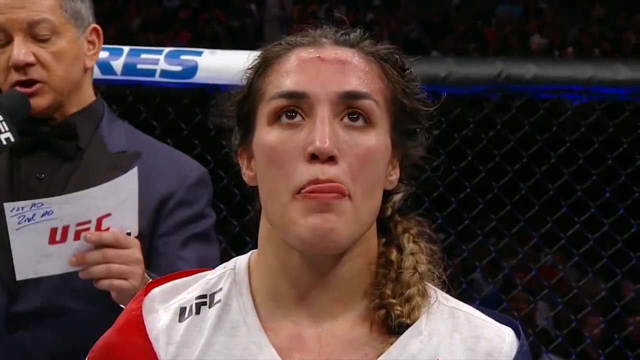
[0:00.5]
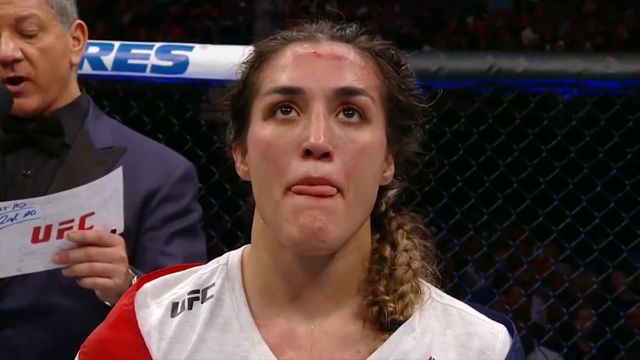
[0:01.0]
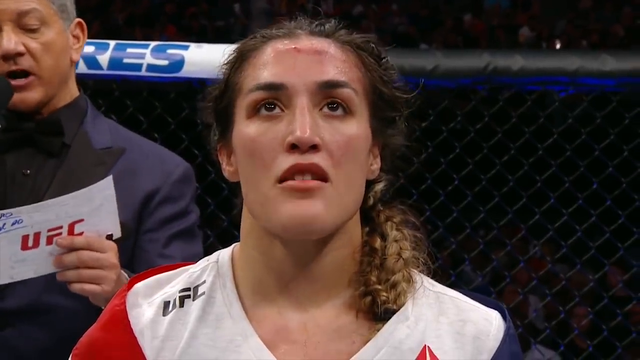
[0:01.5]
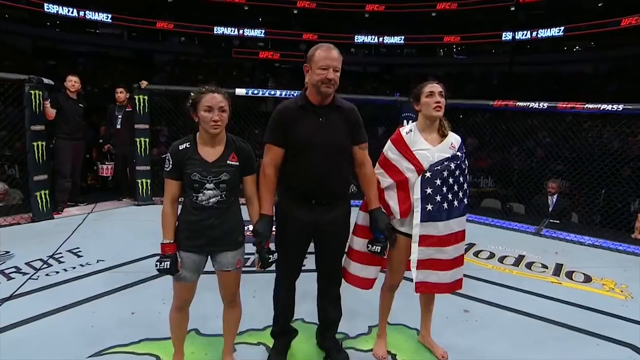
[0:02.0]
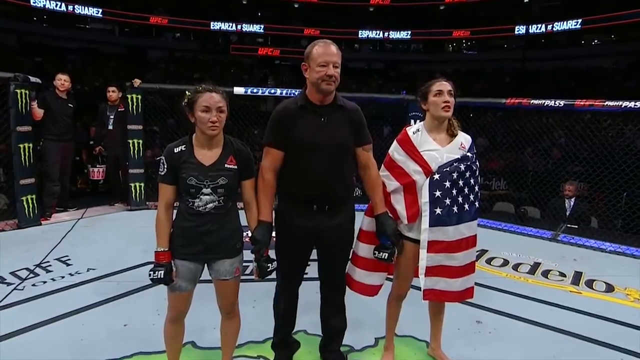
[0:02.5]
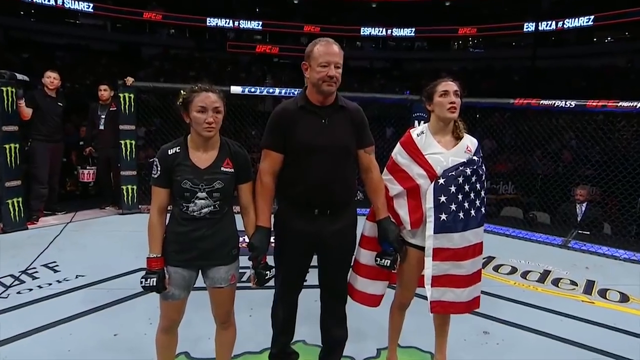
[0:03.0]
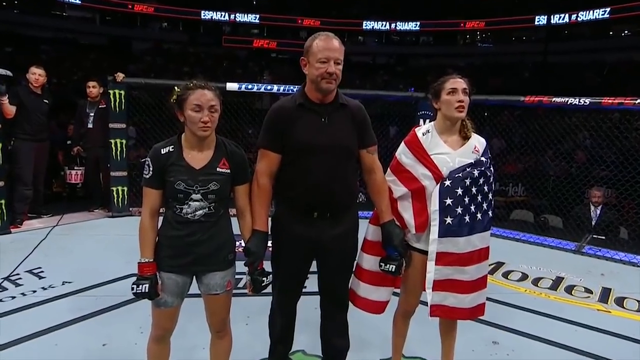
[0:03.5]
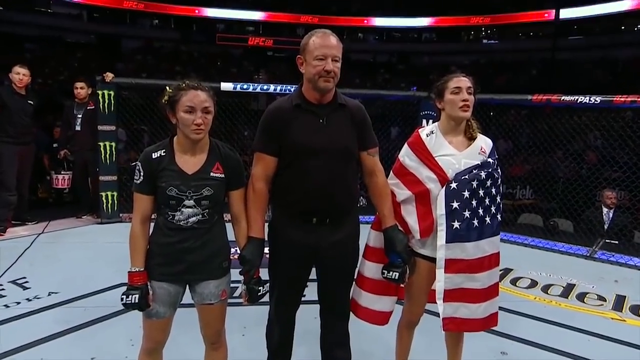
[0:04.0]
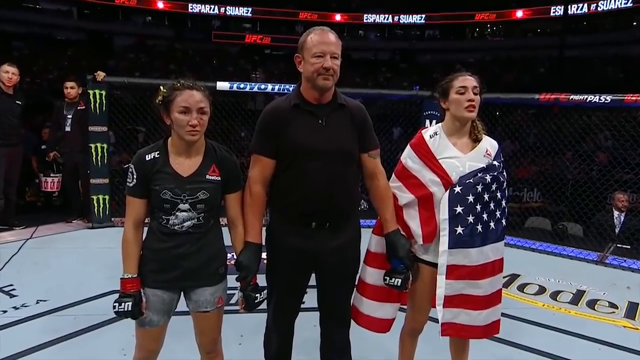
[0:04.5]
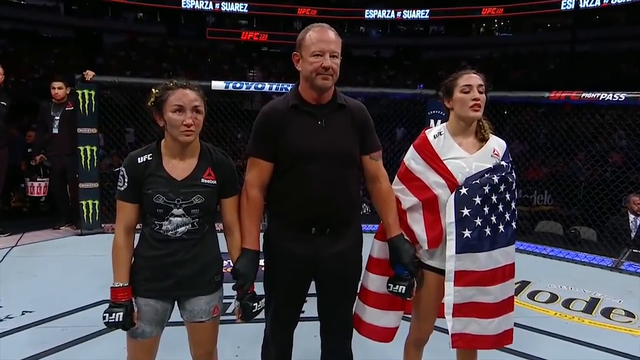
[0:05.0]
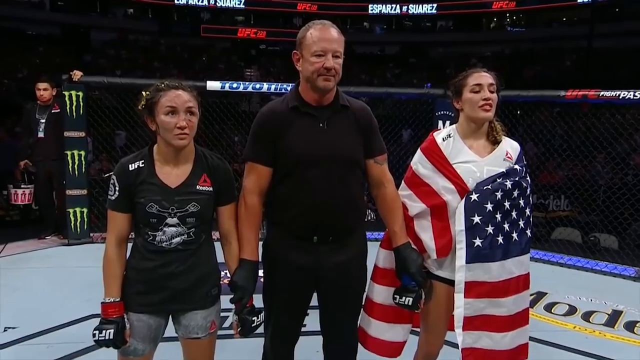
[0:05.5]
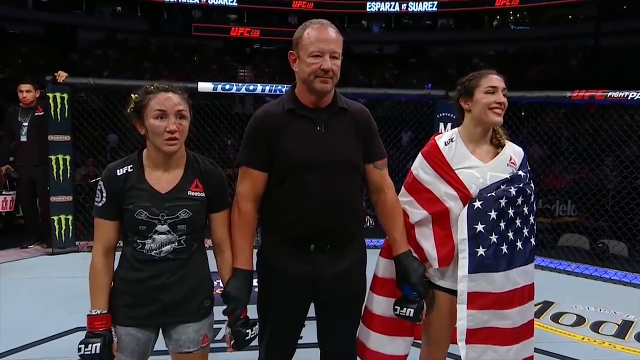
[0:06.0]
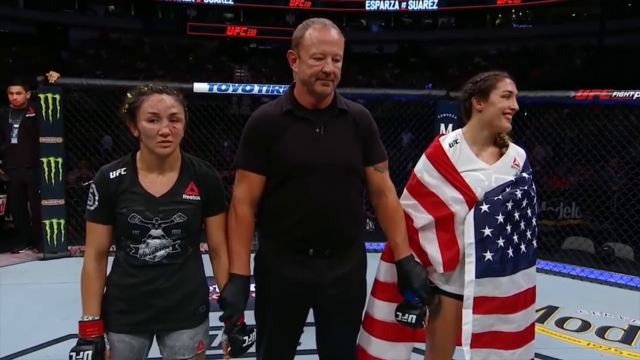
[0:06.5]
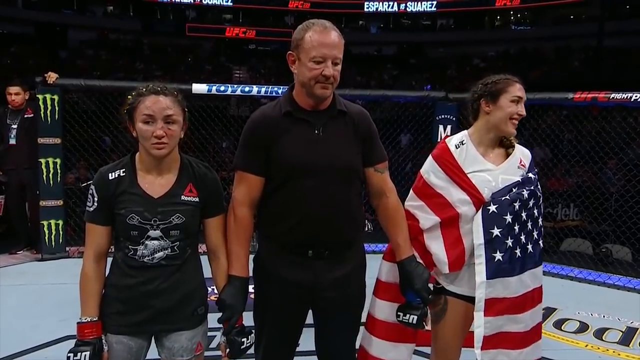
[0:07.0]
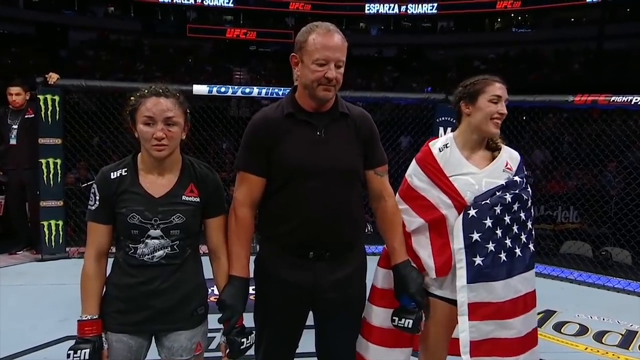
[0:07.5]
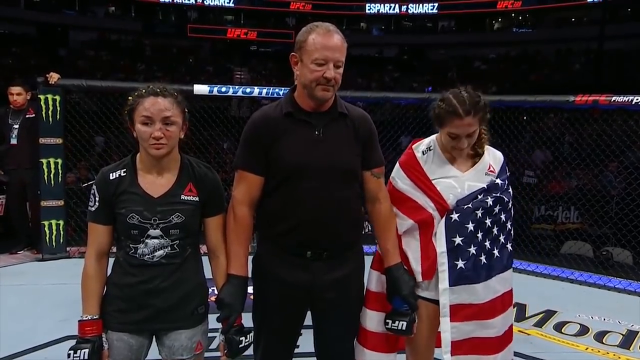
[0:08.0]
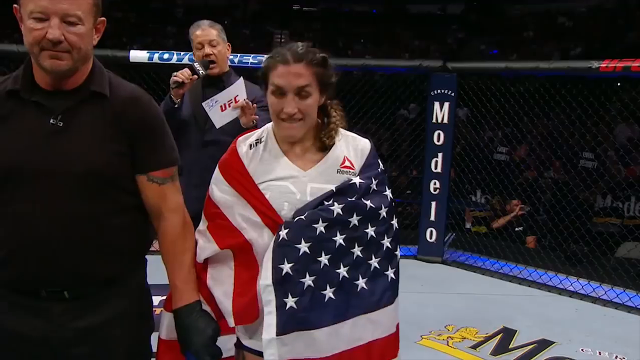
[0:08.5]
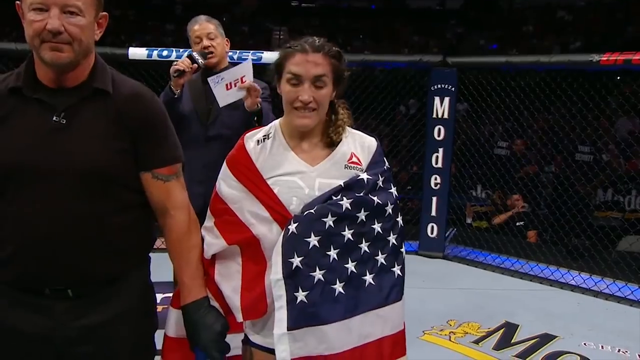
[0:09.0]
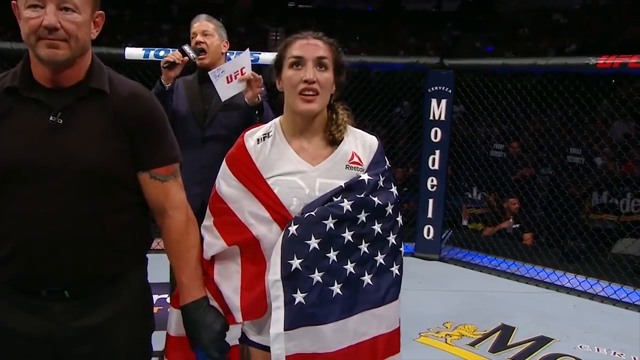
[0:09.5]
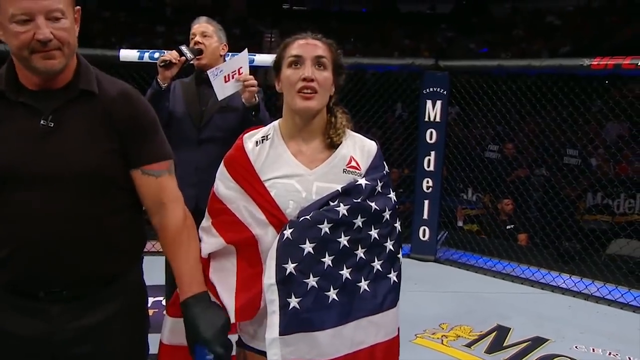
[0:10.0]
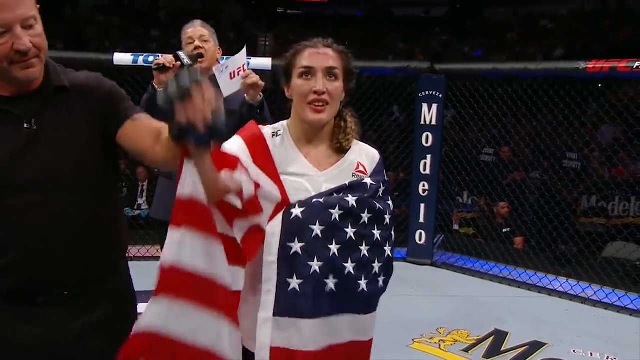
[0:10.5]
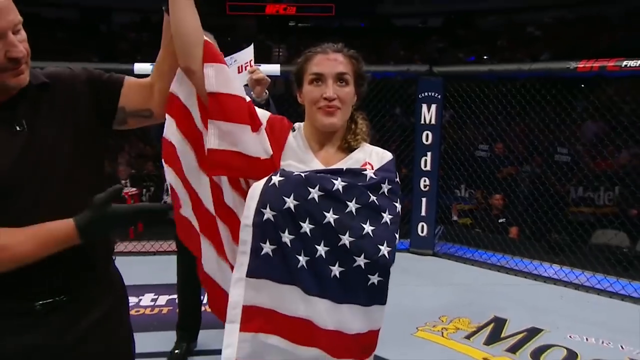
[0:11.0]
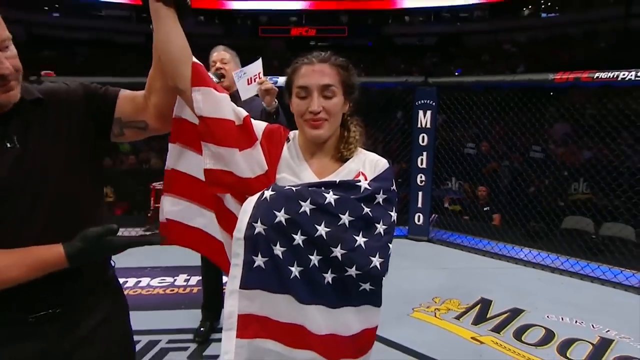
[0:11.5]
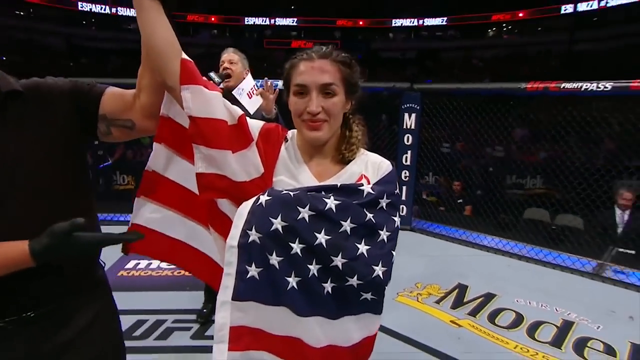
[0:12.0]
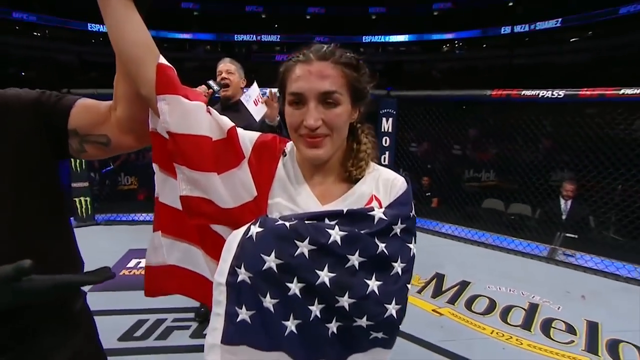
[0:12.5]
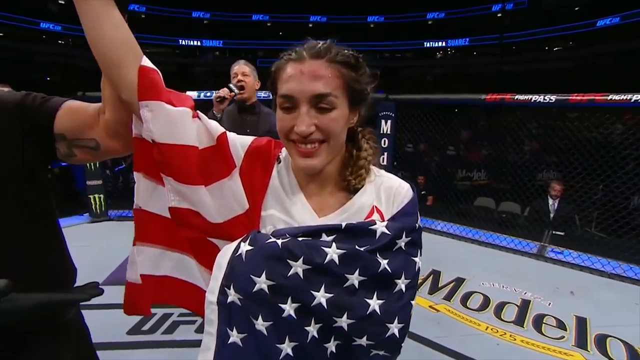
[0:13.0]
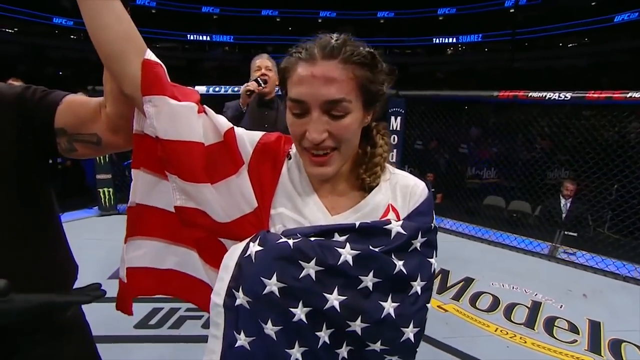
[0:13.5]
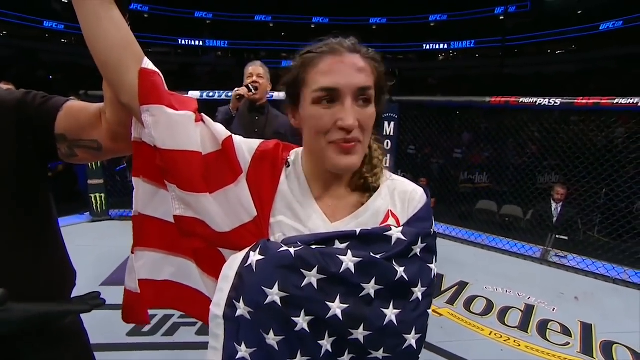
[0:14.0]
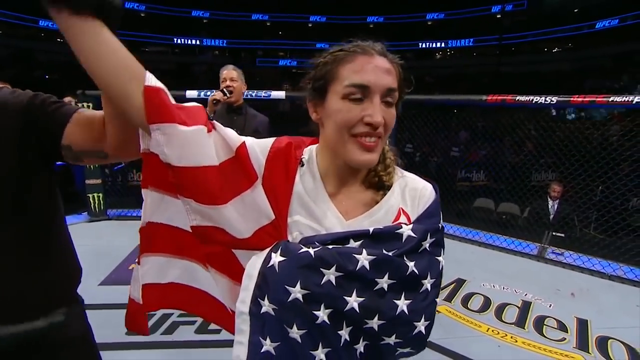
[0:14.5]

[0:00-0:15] Two women fighters are in what looks like a UFC octagon. In the middle, a man in a black polo shirt, apparently a referee, holds both of their hands and wears black gloves. He raises his left hand, signifying that the woman to his left, who wears an American flag with red, white and blue stripes around her shoulders, is the winner. She has brown hair pulled back into a kind of ponytail. Behind them stands an announcer in an entirely black suit, holding a microphone up to his mouth with his right hand. The other fighter, to the right of the referee, wears a black shirt and gray shorts with UFC gloves; she has brown hair and is smaller than the other fighter. Over her right shoulder is a Monster Energy logo on the turnbuckles. "Modelo" is written on the floor of the octagon, and a Toyo Tire advertisement appears on the ring itself.